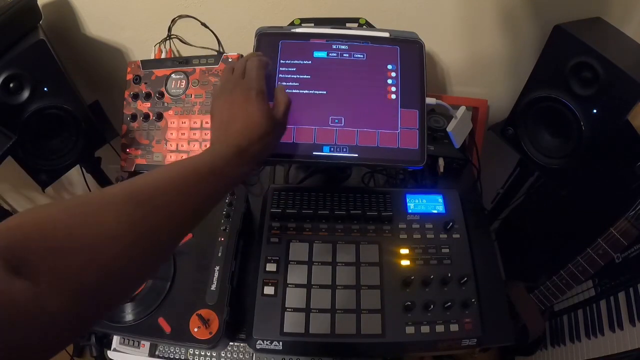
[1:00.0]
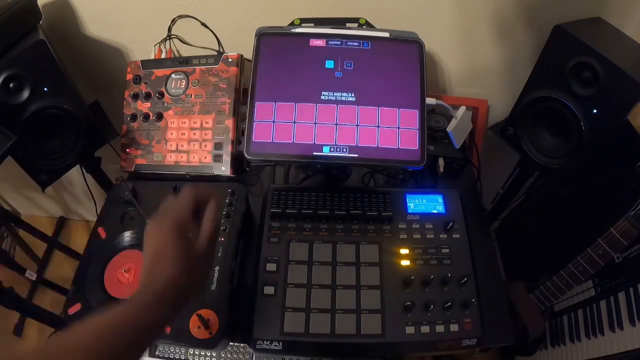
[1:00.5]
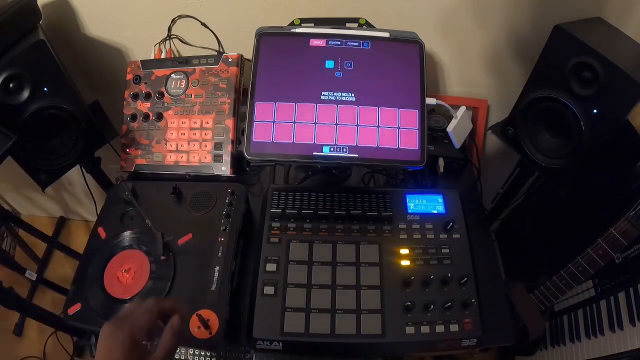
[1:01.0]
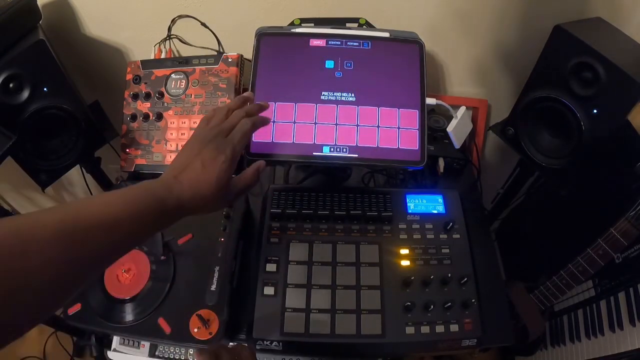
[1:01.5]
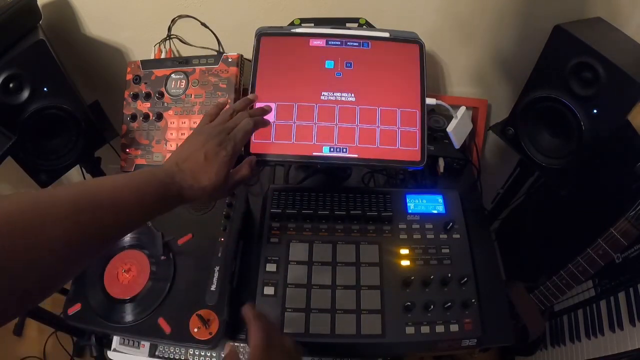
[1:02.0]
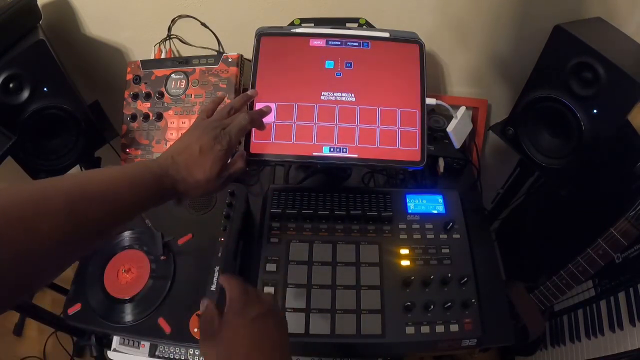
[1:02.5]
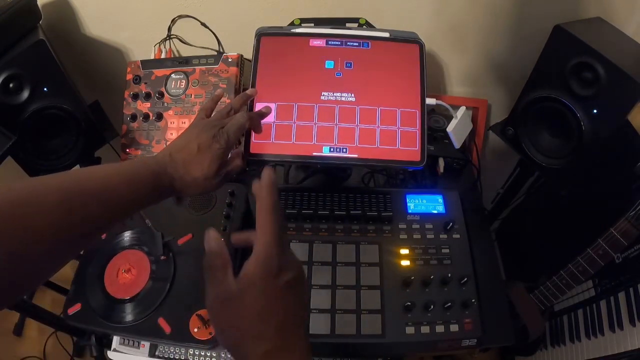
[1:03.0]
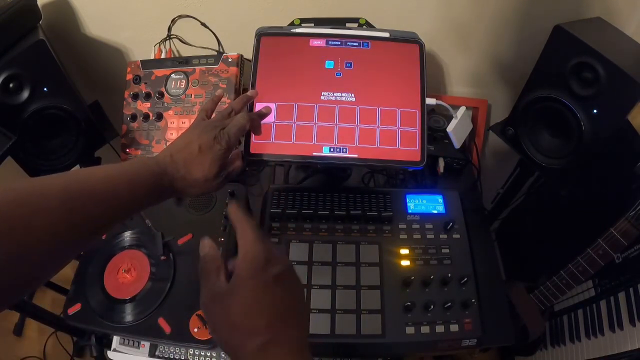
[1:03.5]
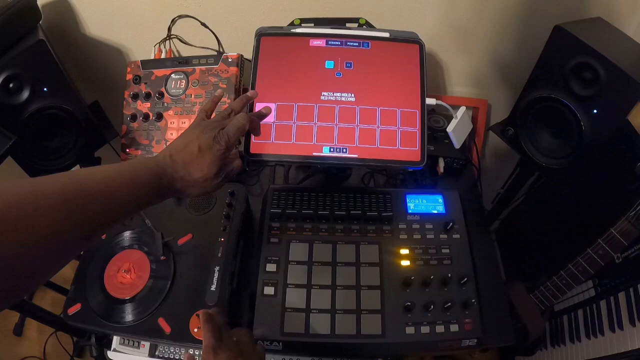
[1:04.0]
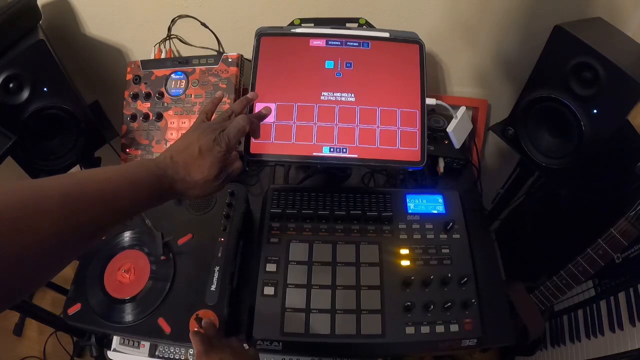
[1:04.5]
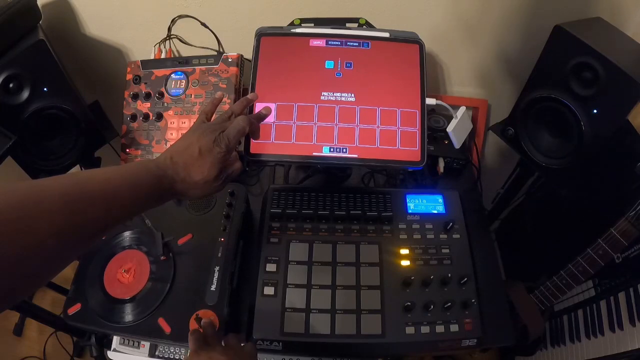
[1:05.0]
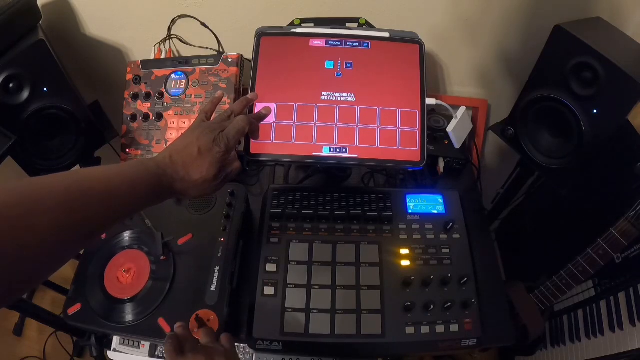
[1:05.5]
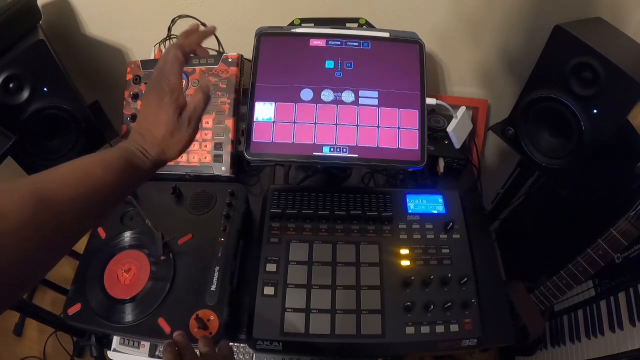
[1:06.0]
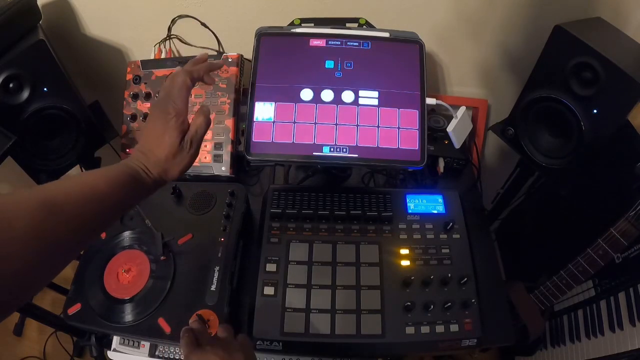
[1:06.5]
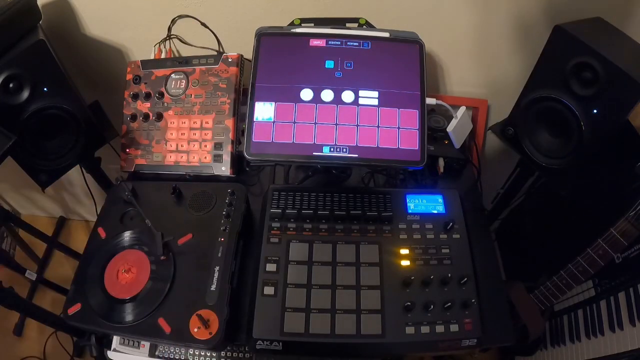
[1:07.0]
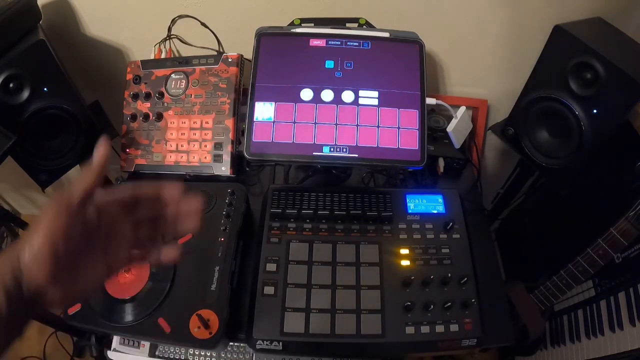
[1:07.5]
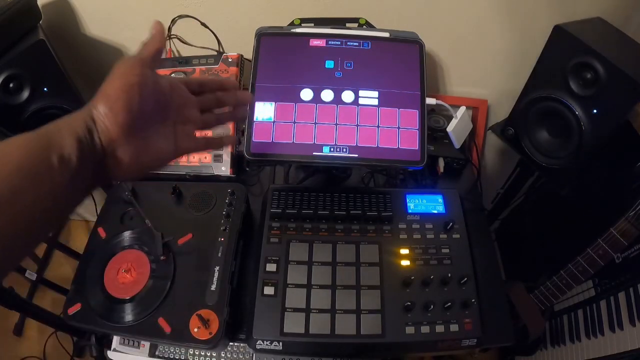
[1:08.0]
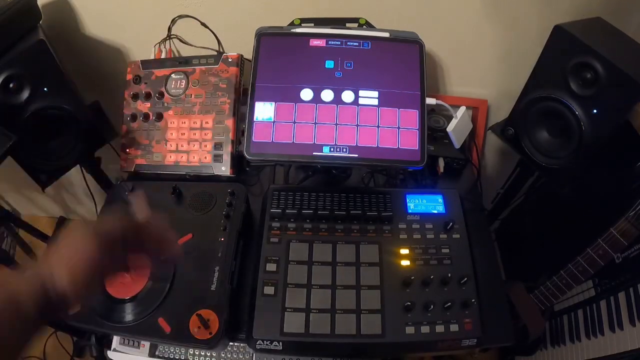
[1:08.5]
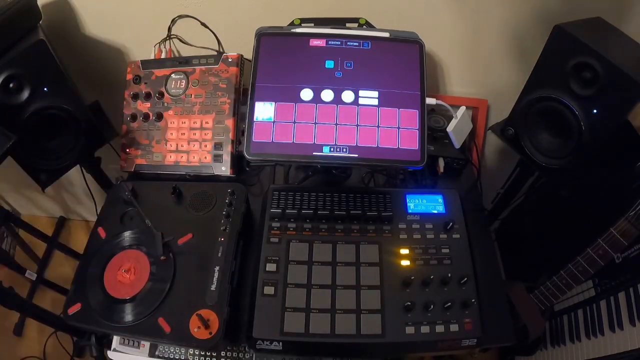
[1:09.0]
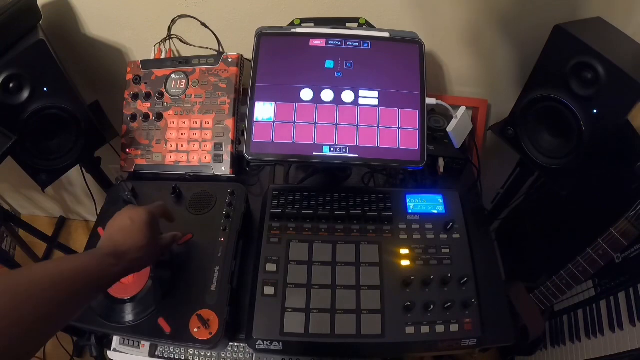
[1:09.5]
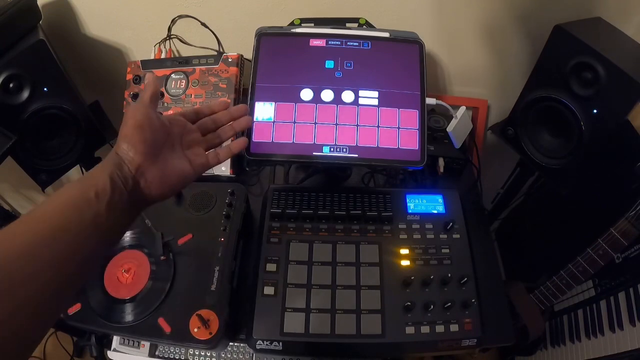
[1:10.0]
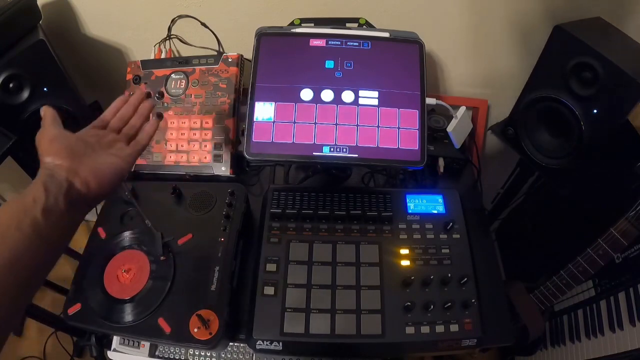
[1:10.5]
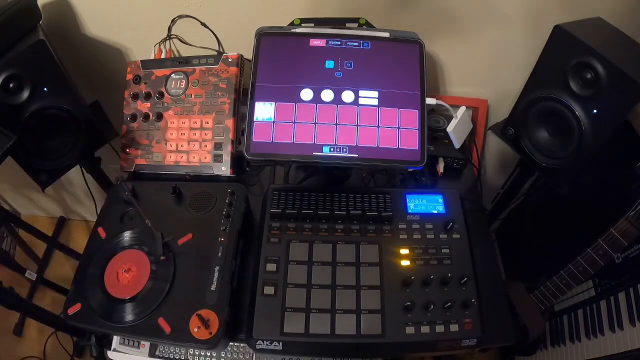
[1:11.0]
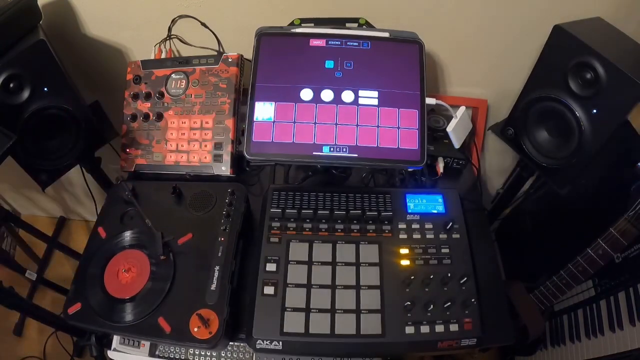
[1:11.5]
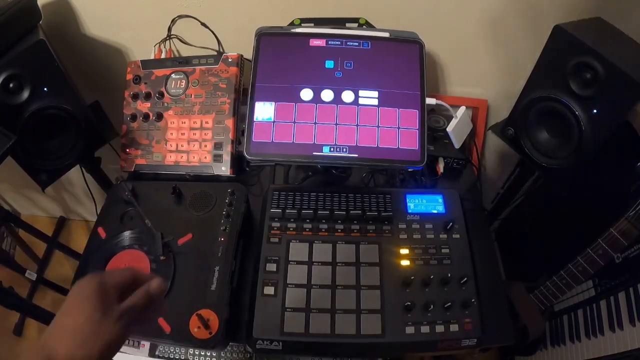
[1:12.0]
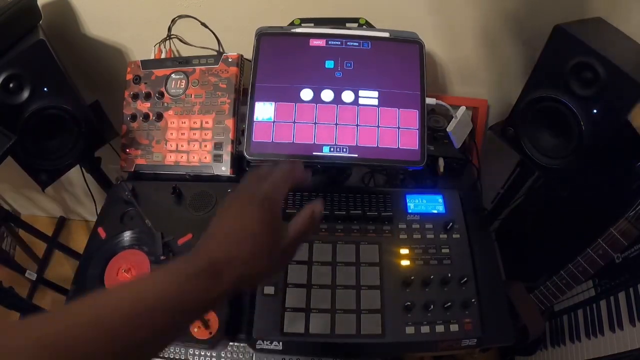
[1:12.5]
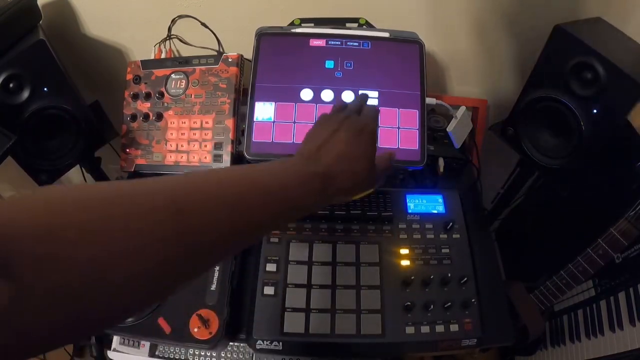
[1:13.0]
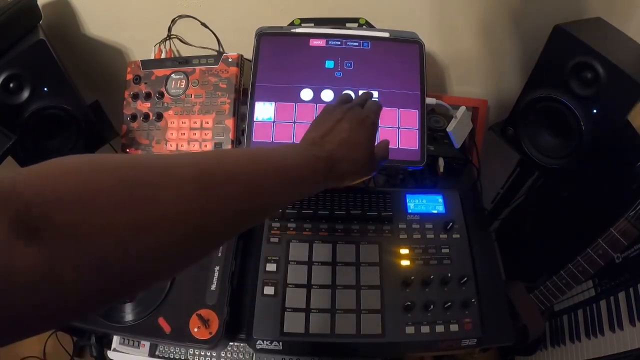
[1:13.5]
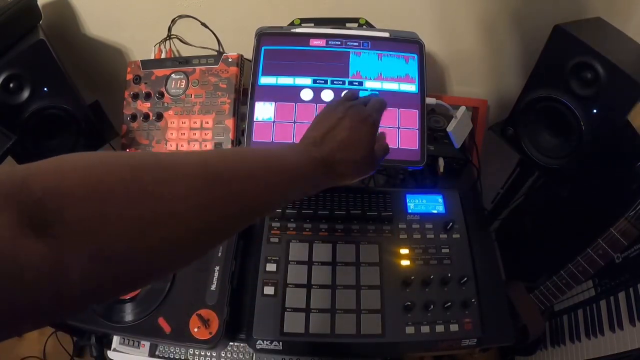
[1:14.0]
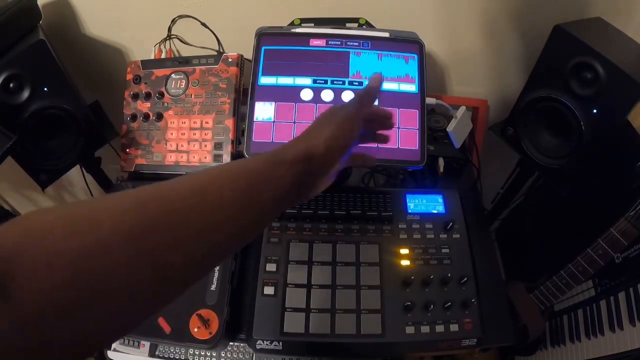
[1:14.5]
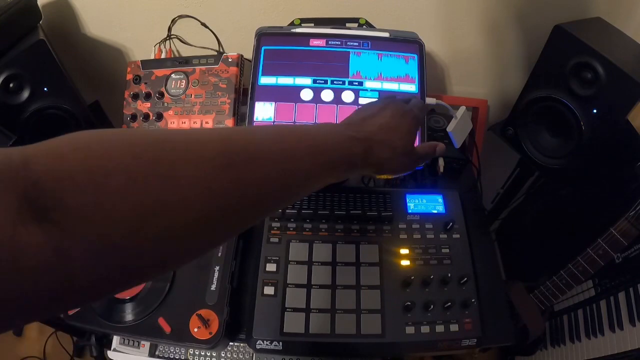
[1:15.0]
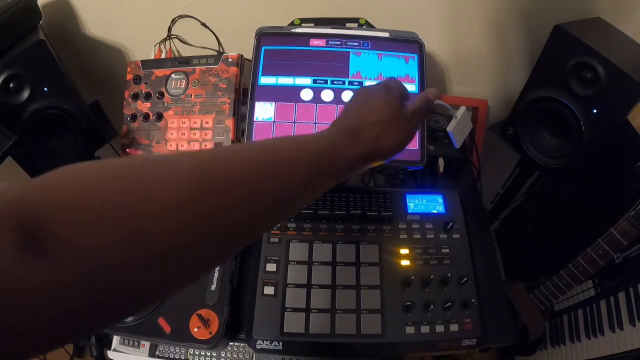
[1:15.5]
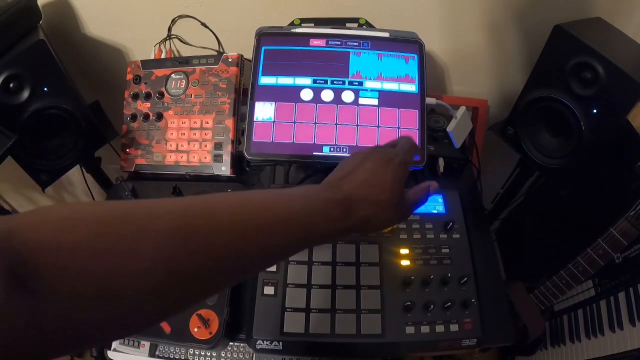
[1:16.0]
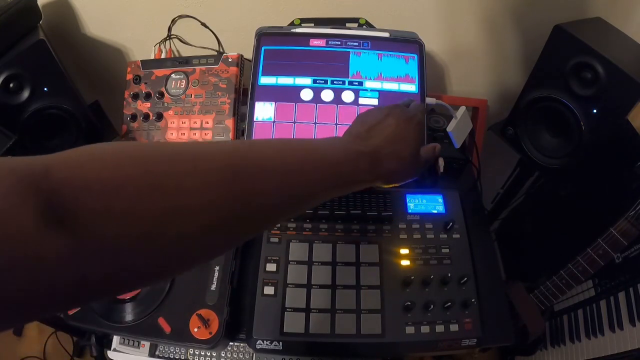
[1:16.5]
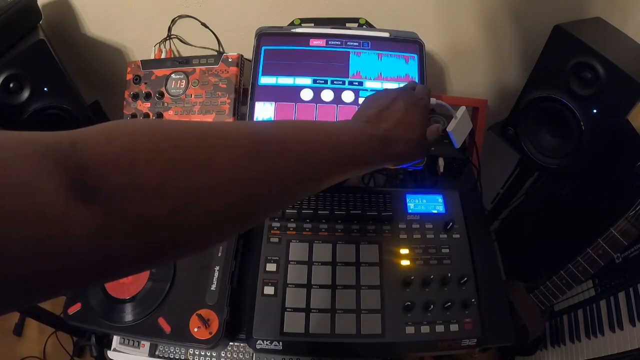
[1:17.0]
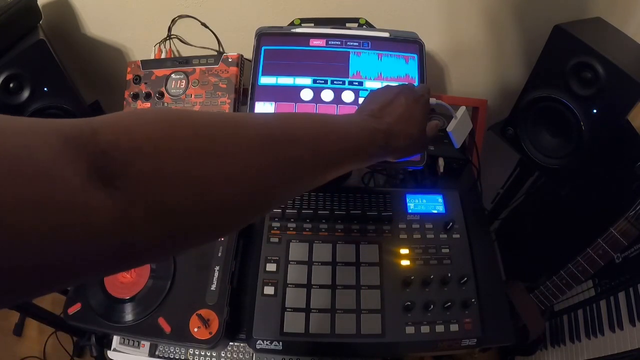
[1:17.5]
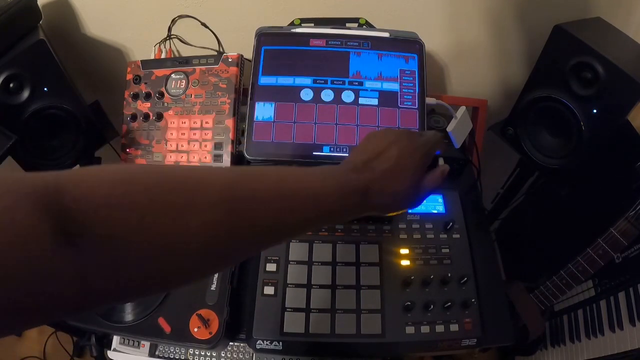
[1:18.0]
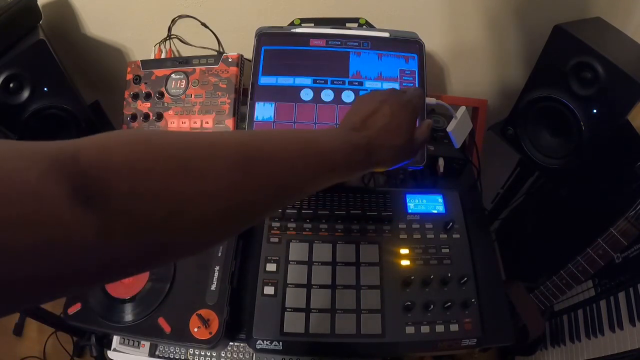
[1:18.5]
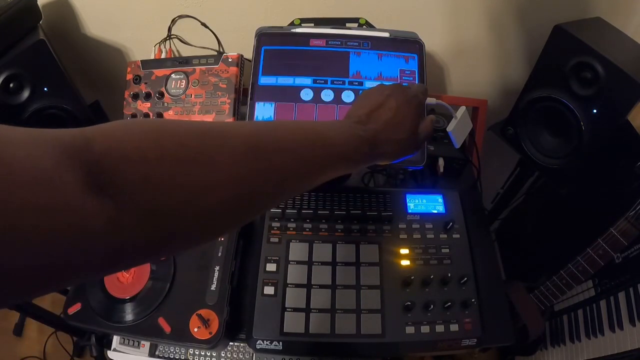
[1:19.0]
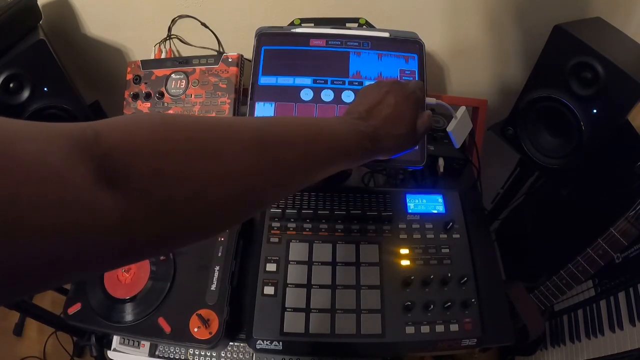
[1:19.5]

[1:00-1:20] The user keeps pressing buttons on the piece of electronic equipment in the center of the upper part of the screen, moving their hand around. At one point their palm faces up, as if they are explaining what they are doing on the screen. They then move their hand back in and press more buttons on the touchscreen. Each press brings up different menus and digital screens as they toggle switches and manipulate the controls on the touchscreen pad.